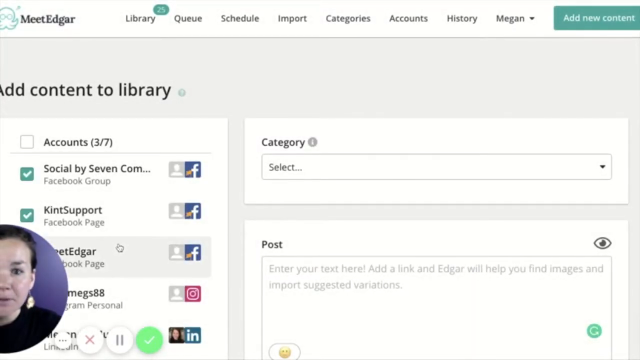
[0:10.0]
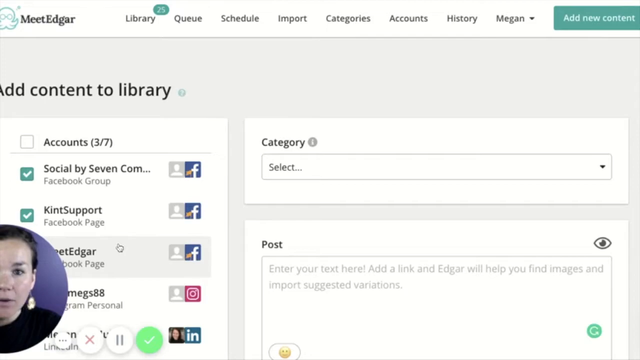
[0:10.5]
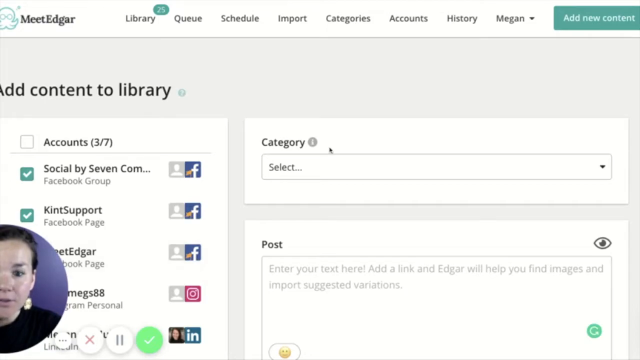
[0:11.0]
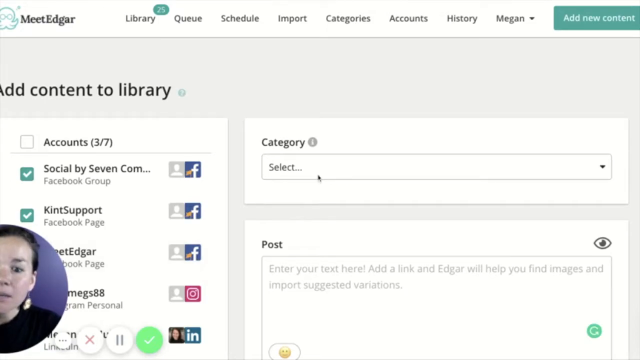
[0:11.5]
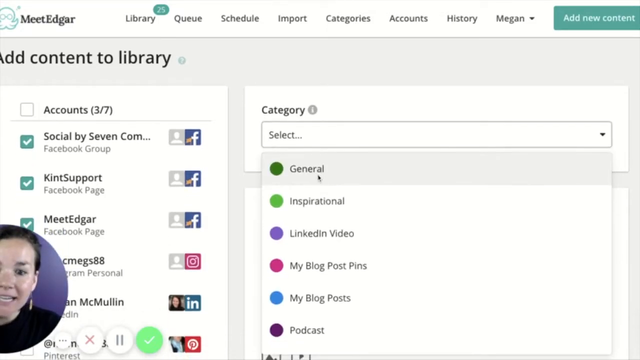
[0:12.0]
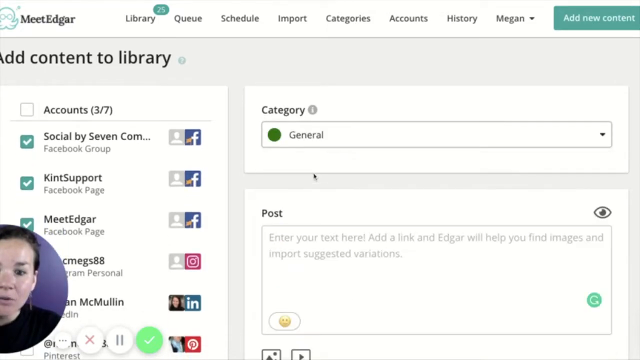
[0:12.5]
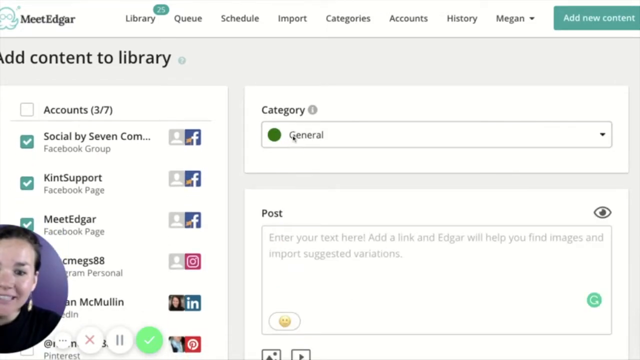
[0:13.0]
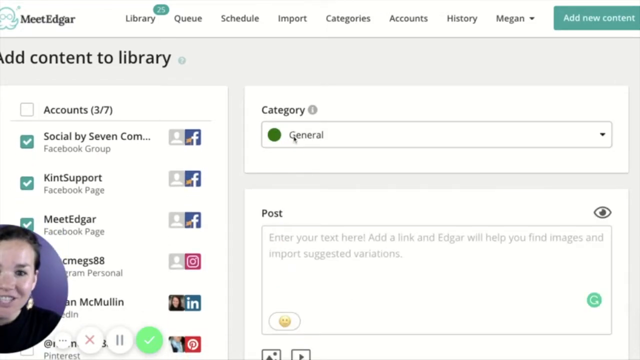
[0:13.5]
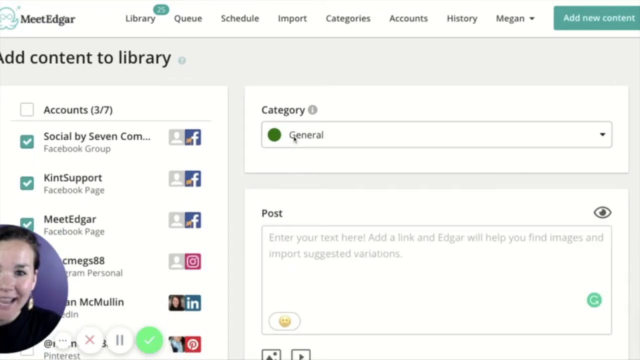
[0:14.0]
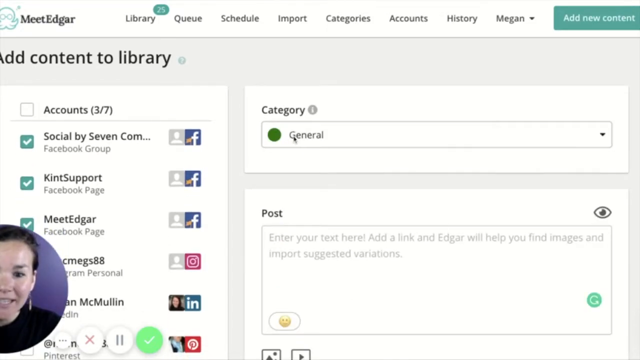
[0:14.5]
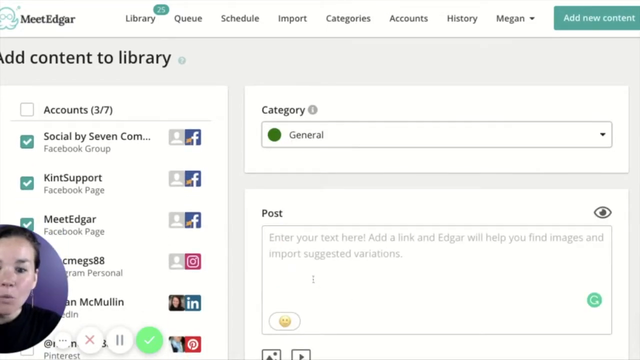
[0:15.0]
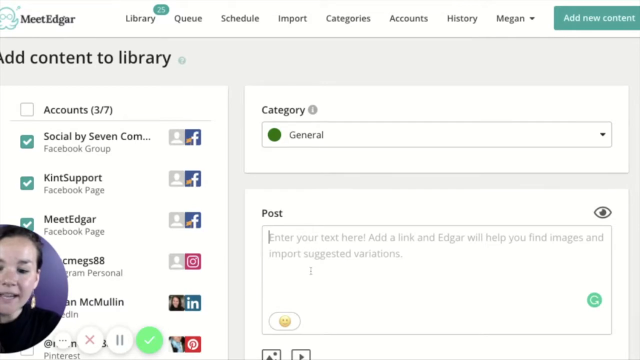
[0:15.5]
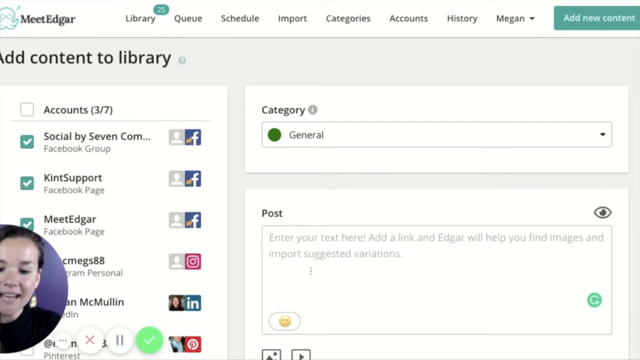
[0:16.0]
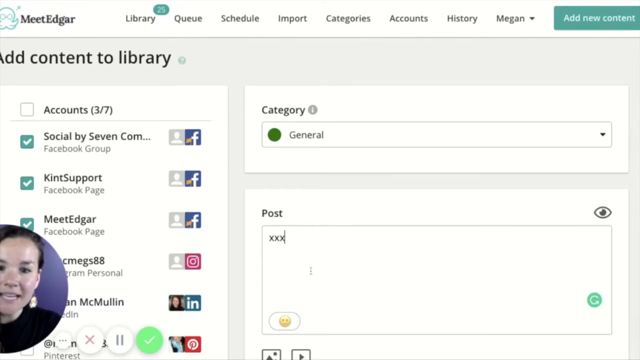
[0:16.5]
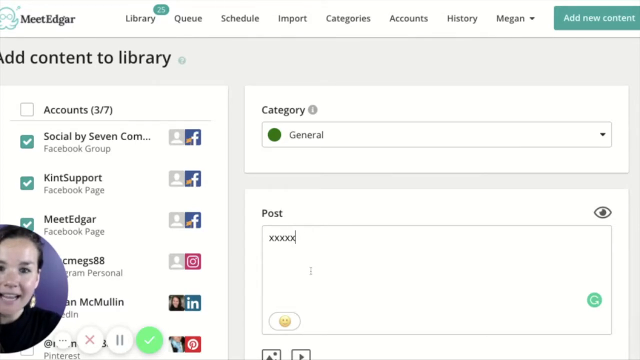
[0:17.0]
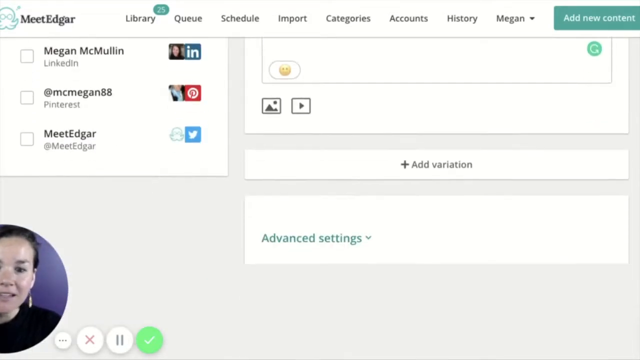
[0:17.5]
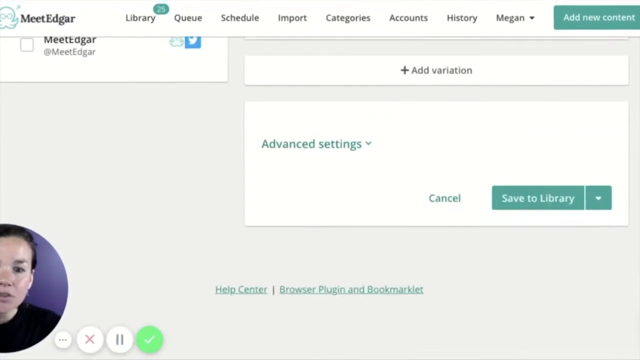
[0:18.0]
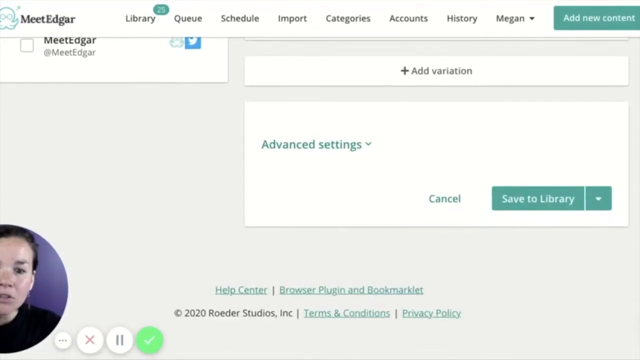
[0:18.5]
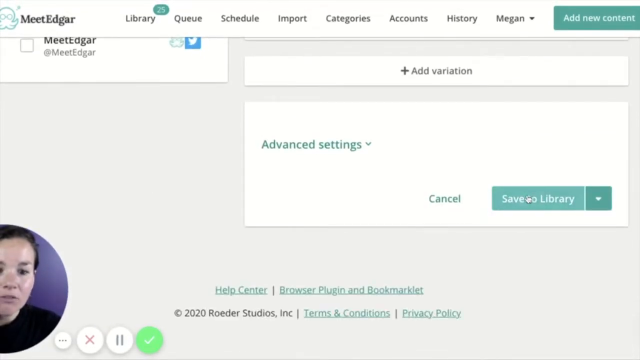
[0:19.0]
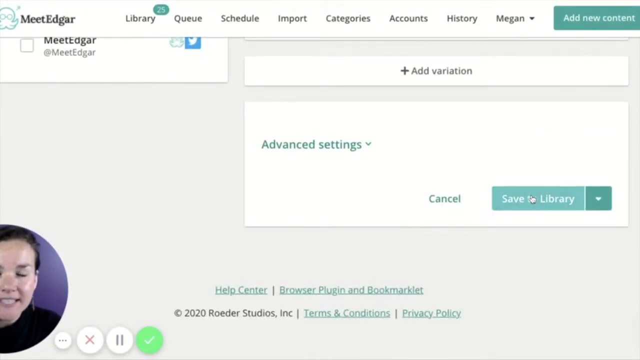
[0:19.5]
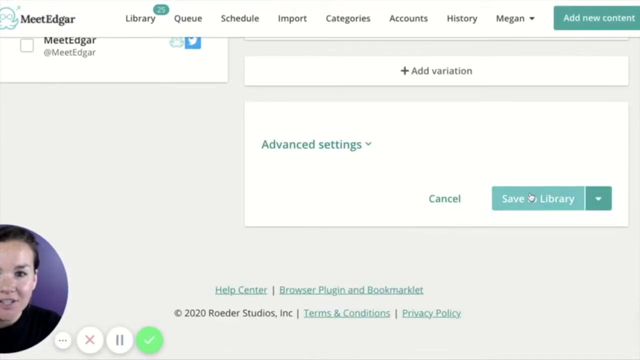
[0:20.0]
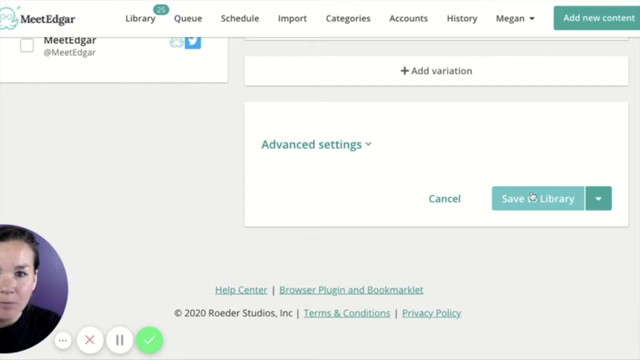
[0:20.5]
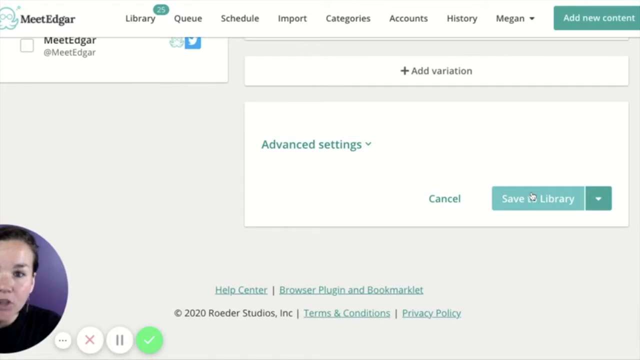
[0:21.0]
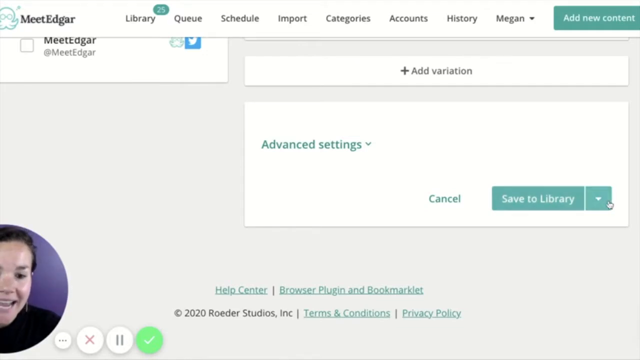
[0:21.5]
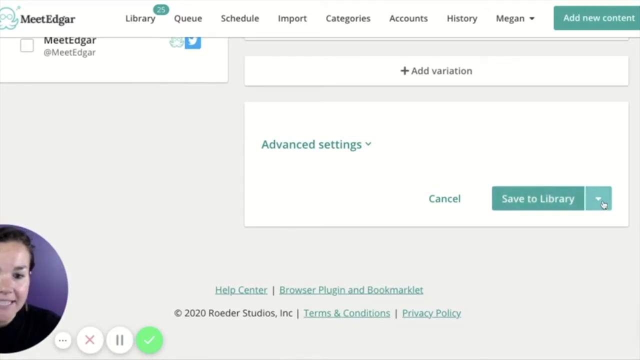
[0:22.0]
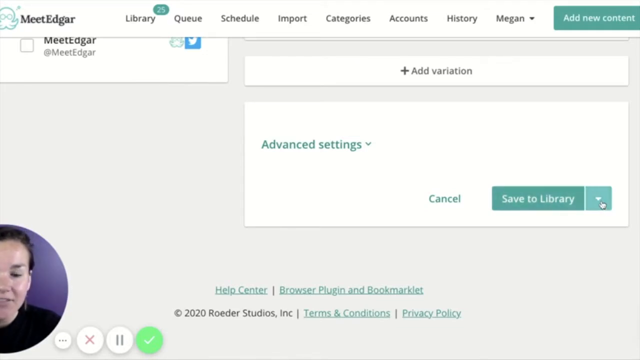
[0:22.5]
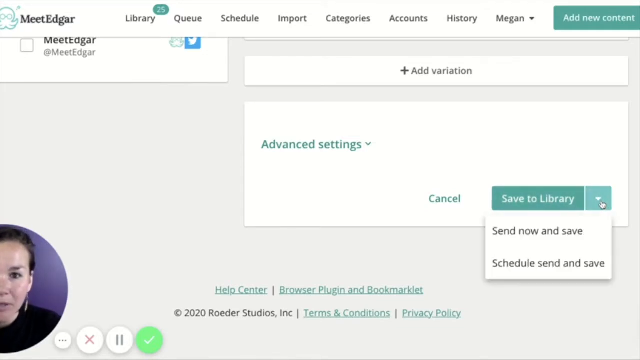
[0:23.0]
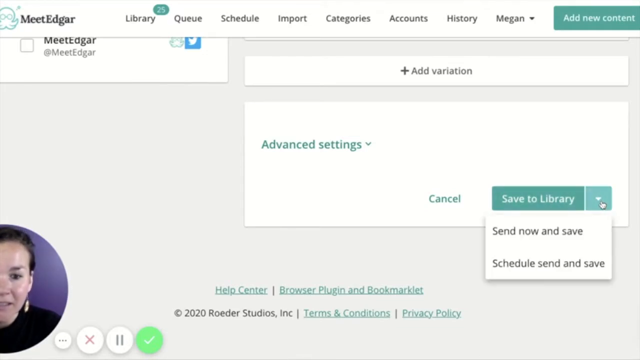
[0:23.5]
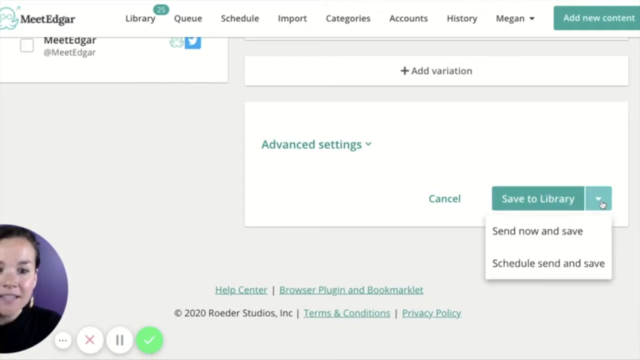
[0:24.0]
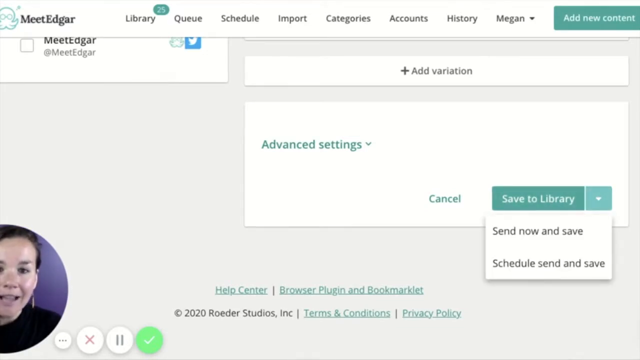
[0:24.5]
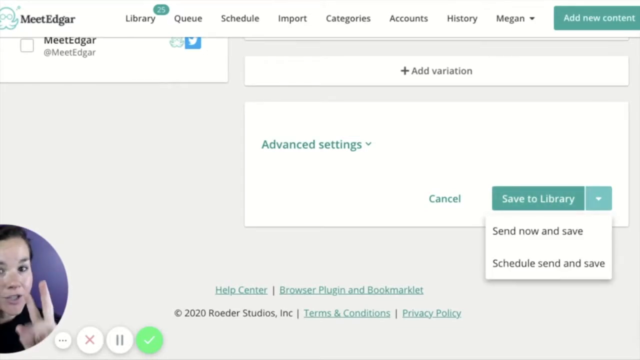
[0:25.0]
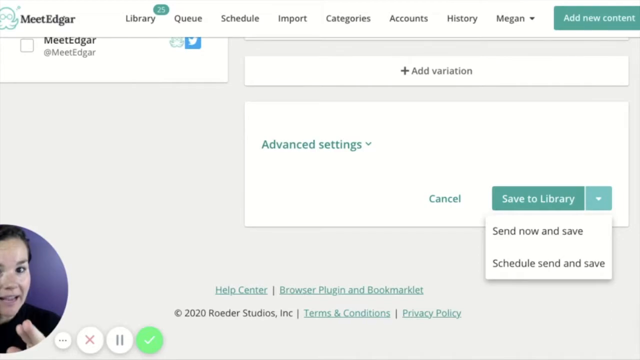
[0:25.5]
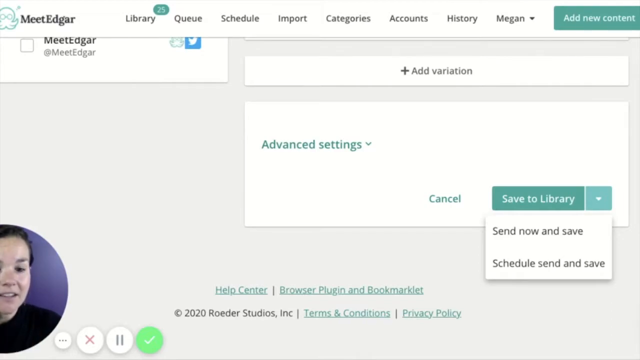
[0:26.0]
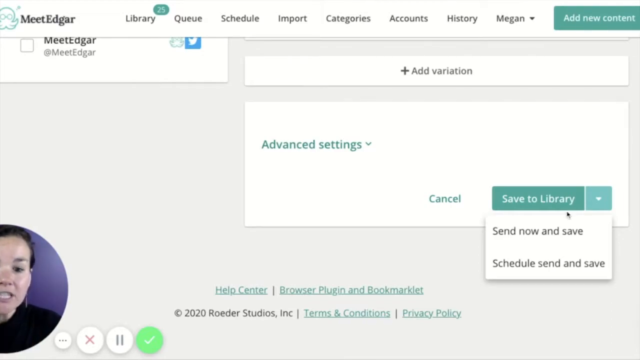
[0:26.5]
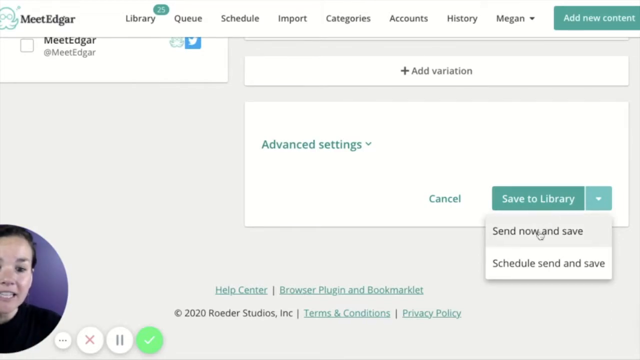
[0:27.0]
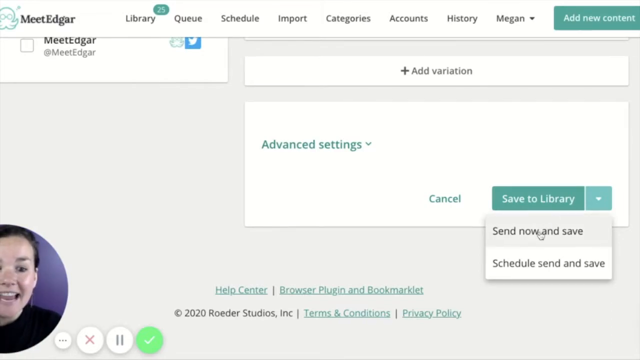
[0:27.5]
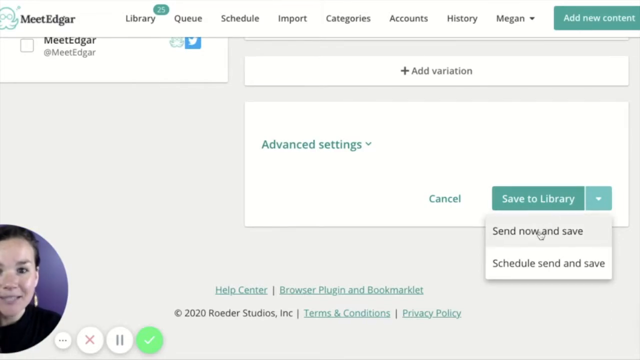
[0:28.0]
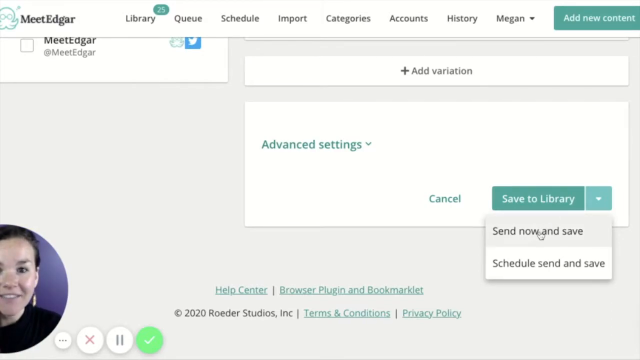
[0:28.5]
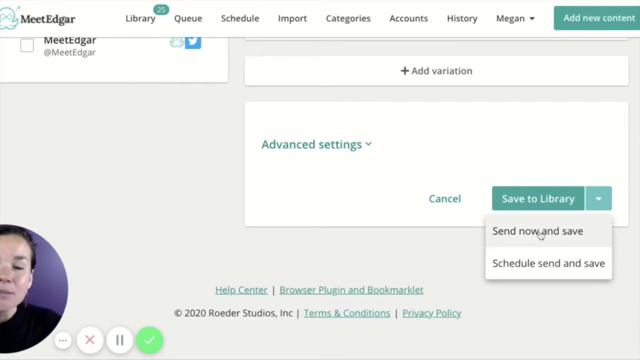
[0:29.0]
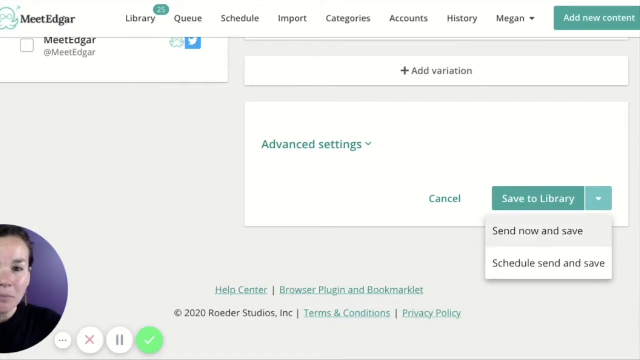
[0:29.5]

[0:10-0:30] The dark-haired woman moves to the bottom left corner of the screen, so that her computer screen takes up almost the entire screen. On the left-hand side of the screen is a list of social media icons, including Facebook, Instagram, and LinkedIn. The view then cuts to her selecting a category from a list of categories such as General, Inspirational, LinkedIn video, My blog post, and others. Next comes a section labeled "Post," and after that a field or button for saving the post, which has two options under "Save to Library": "send now and save" or "schedule, send and save."